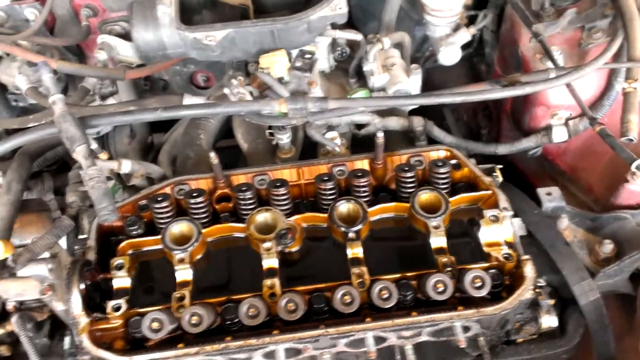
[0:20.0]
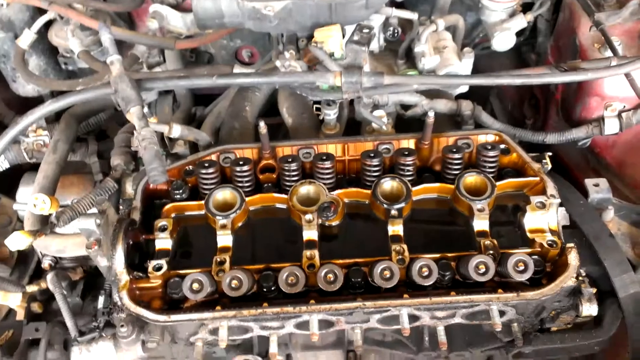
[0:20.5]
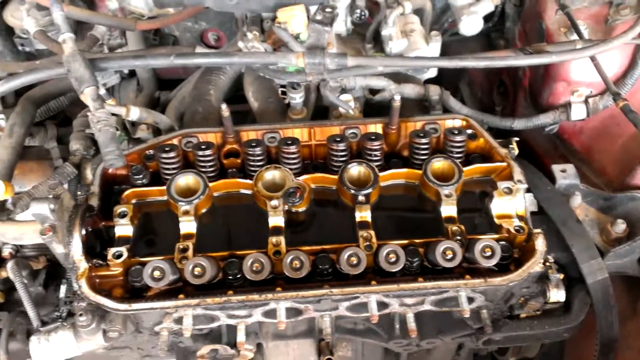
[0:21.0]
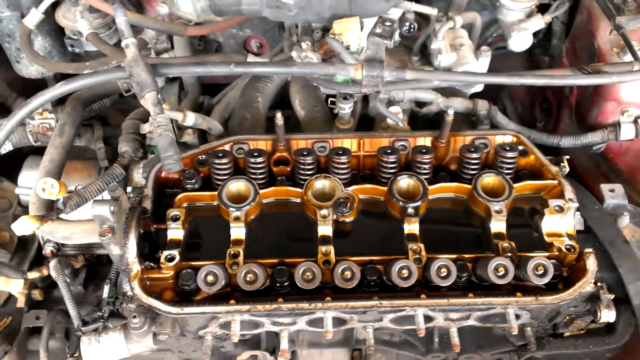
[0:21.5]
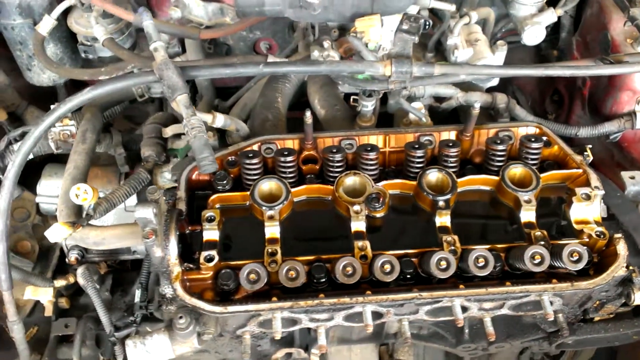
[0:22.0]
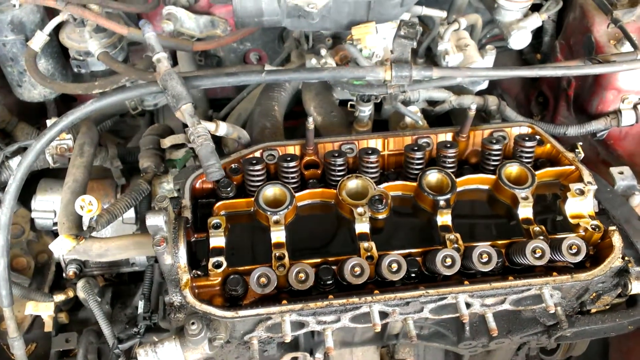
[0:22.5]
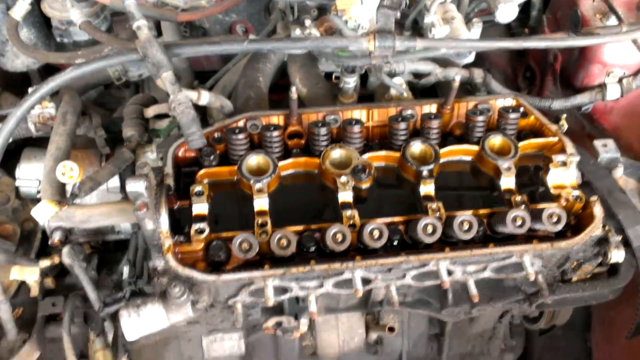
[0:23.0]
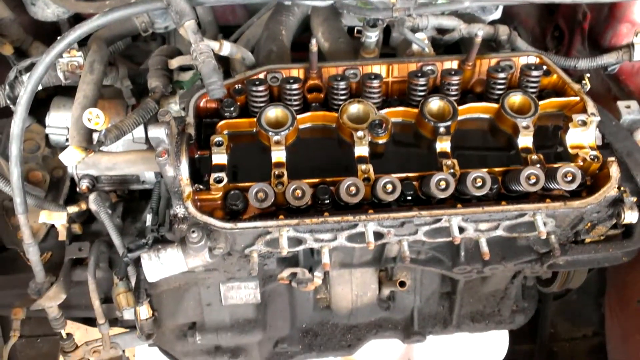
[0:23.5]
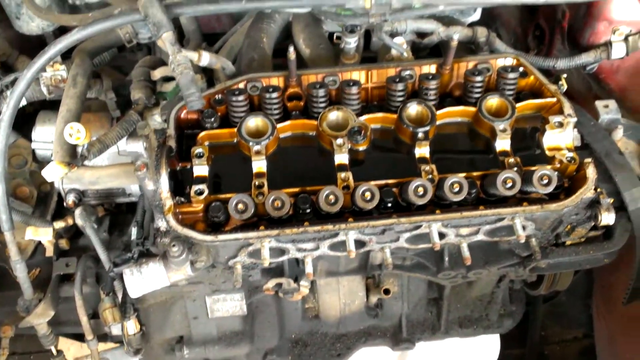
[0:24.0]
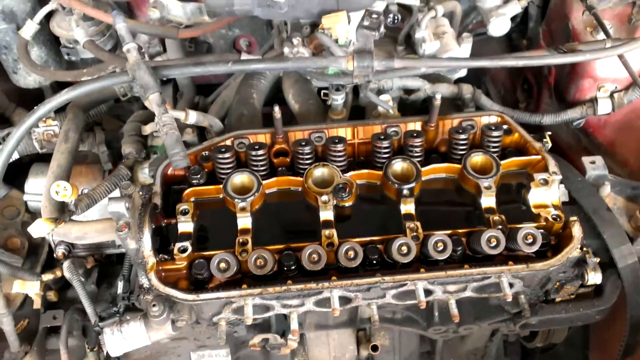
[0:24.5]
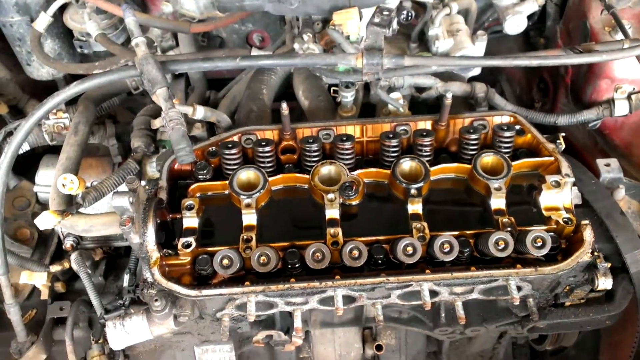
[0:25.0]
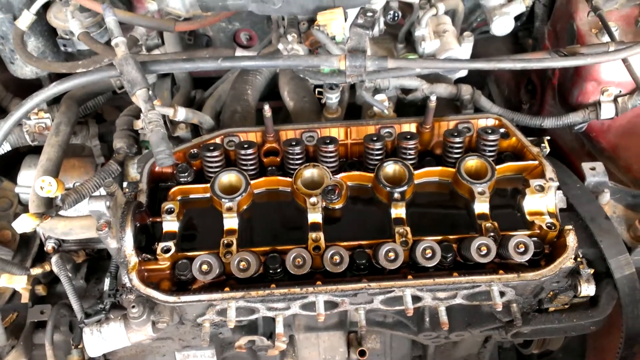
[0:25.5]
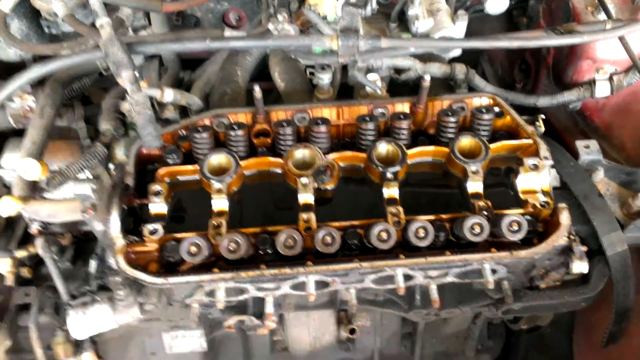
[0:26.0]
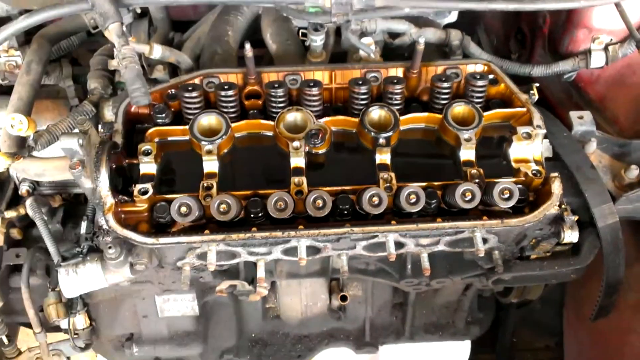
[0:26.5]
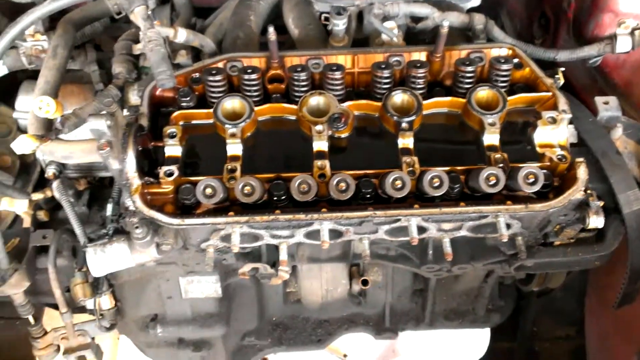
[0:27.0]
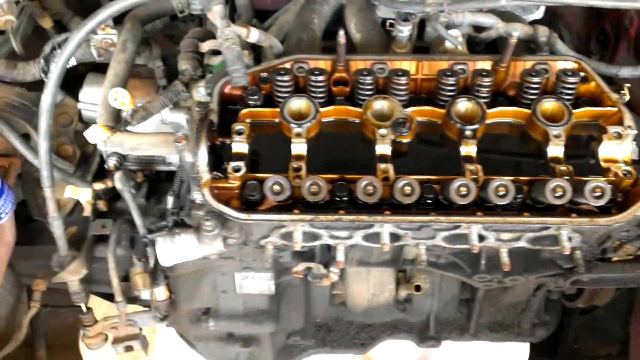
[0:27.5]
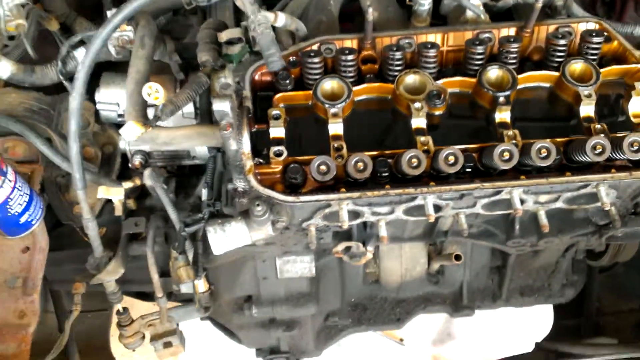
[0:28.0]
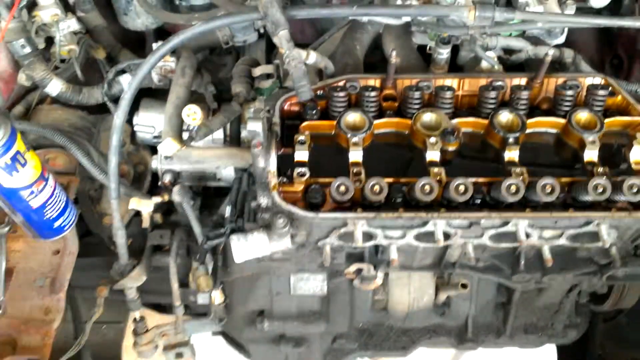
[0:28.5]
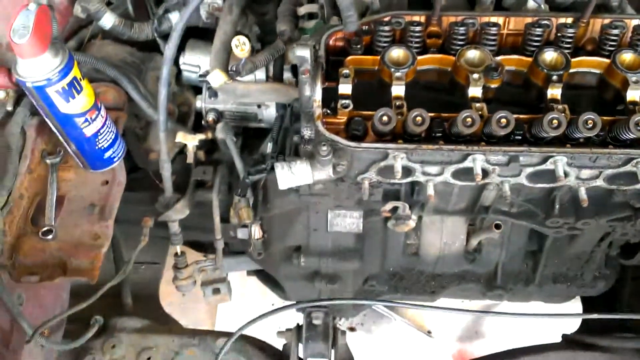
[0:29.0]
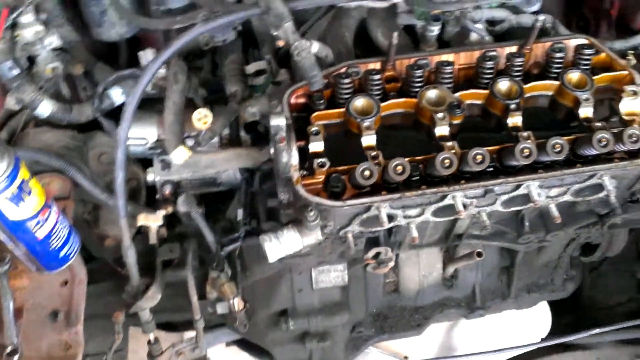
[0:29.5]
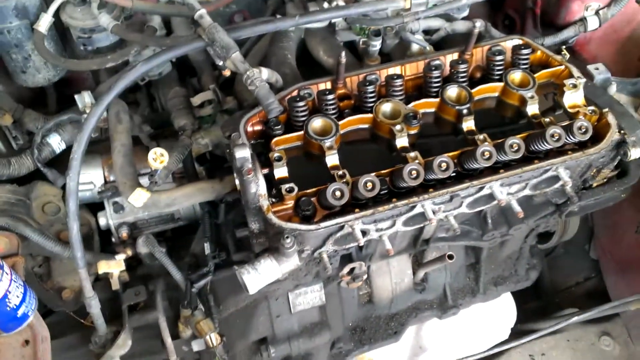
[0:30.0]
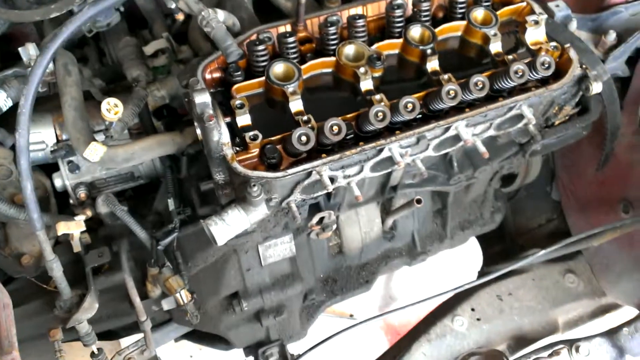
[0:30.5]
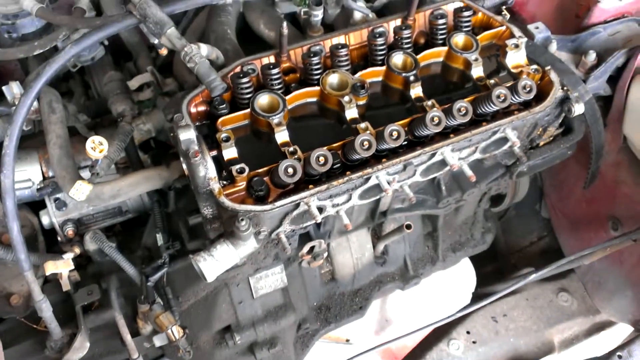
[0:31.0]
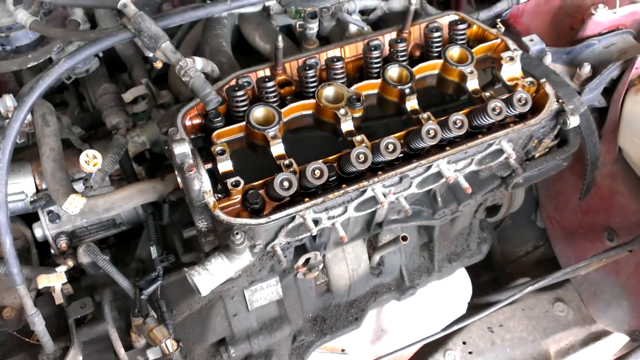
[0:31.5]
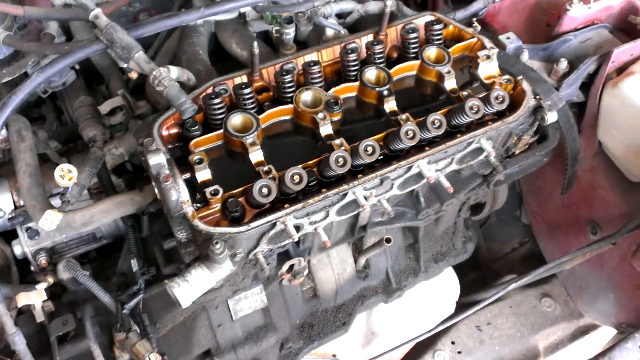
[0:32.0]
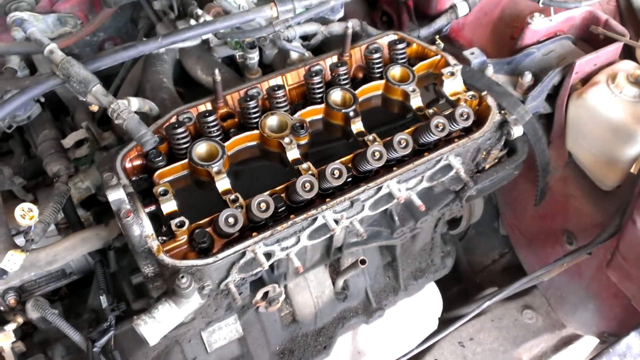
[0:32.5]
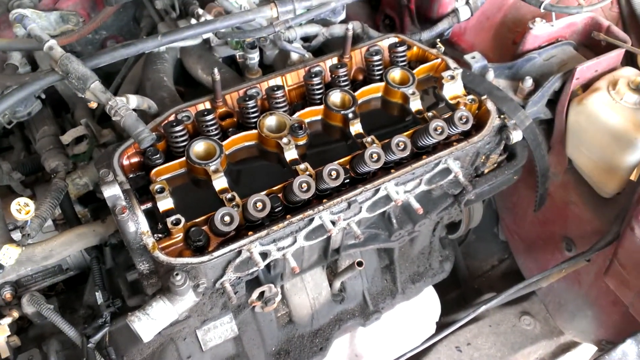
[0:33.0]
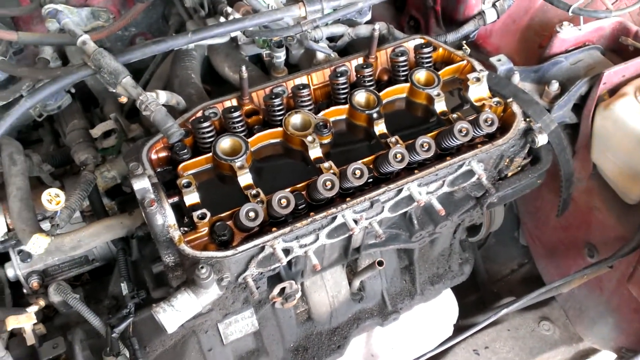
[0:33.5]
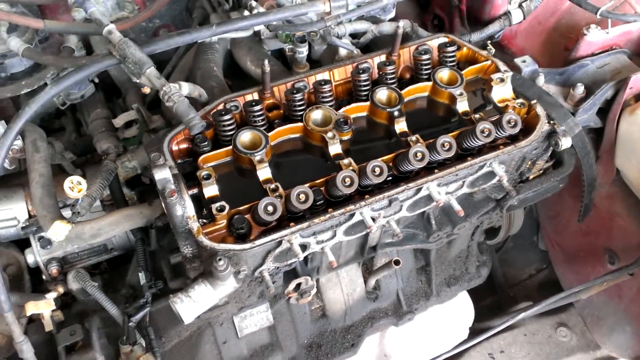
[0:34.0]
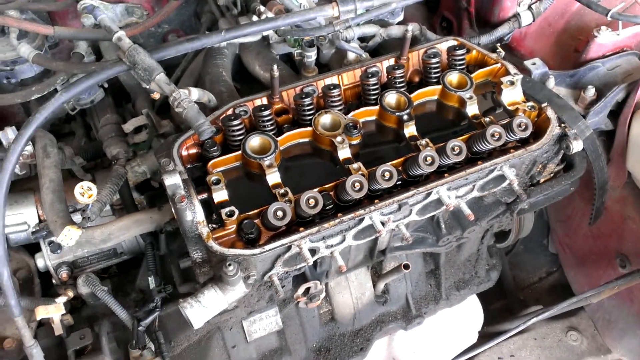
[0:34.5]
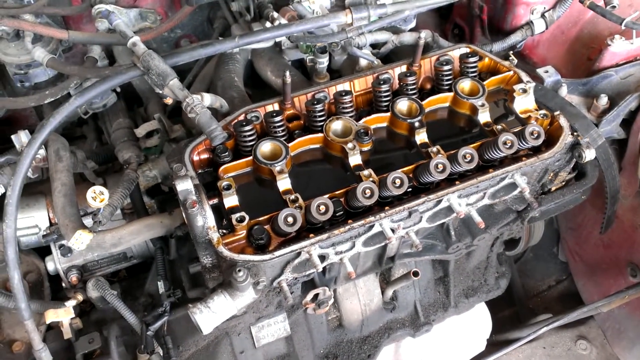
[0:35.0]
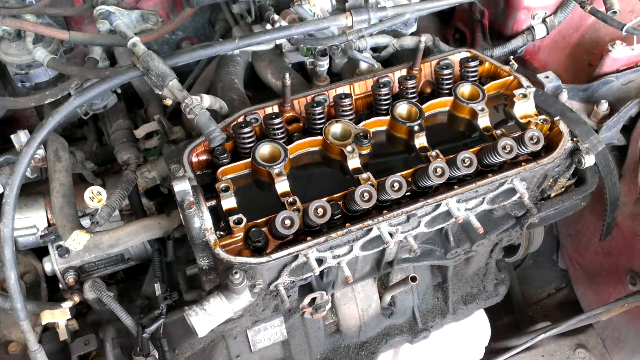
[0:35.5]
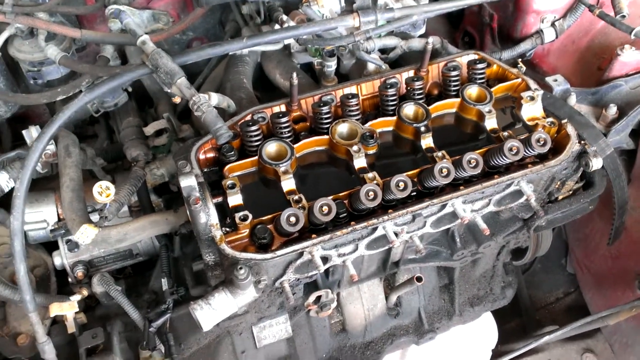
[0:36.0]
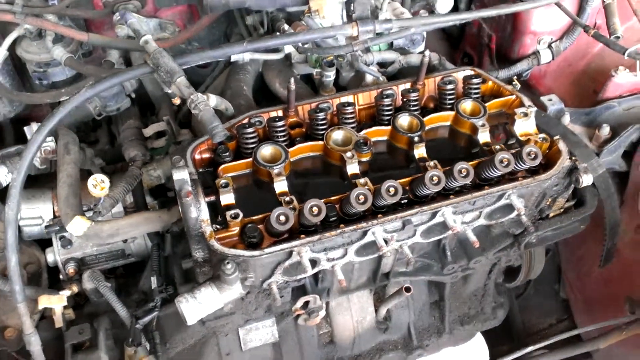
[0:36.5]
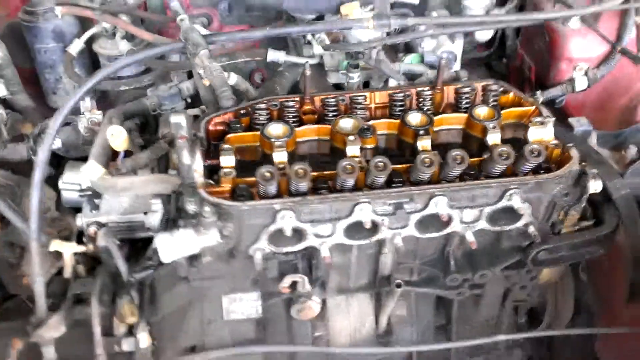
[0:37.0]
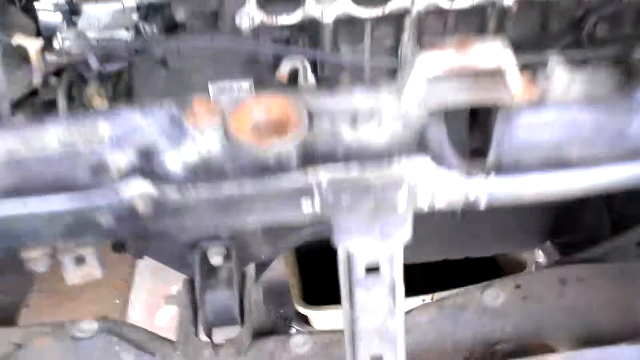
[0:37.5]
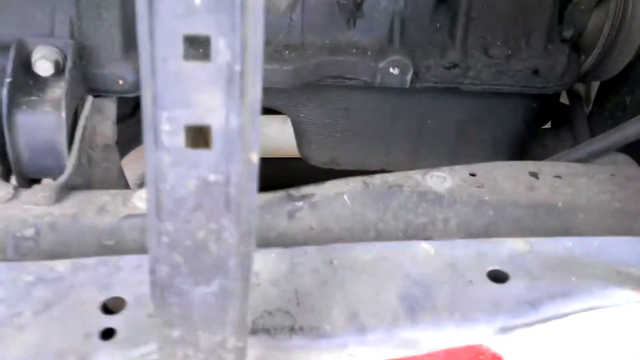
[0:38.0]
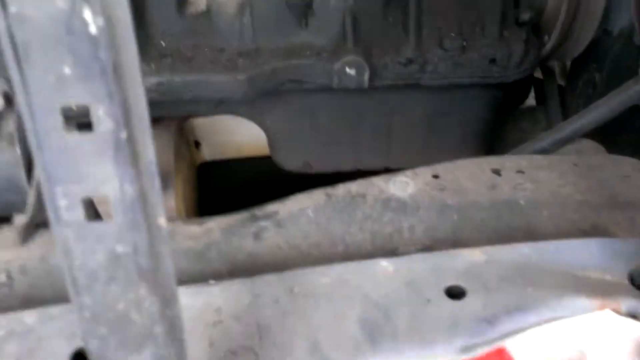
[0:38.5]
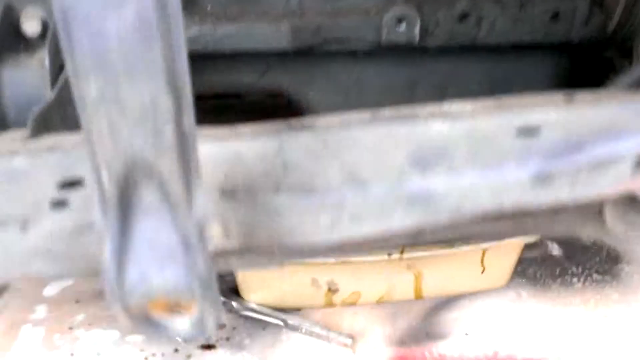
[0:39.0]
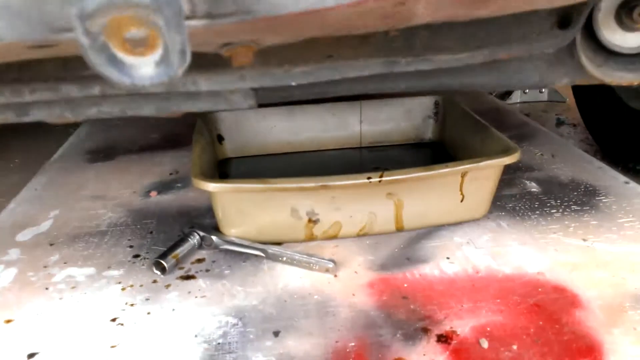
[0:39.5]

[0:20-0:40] The view continues on the piece of machinery in the middle of the vehicle, which has four large bolts in the middle, eight bolts at the top and eight bolts at the bottom. A WD-40 can is on the left side of the screen. Many pieces of gray machinery on the screen have metal tubes and wires running from them, and a bit of the red vehicle shows on the right side. The camera then pans down to a rectangular container on a concrete floor, underneath the vehicle. Tools are visible to the left, behind where the pan is. Many different pieces of machinery are visible, and a bit of the red vehicle shows in the background on the right side of the screen.